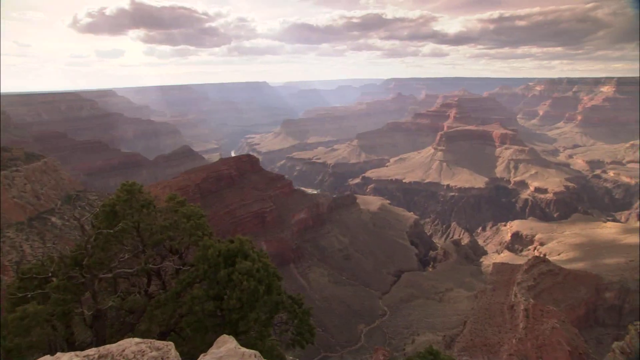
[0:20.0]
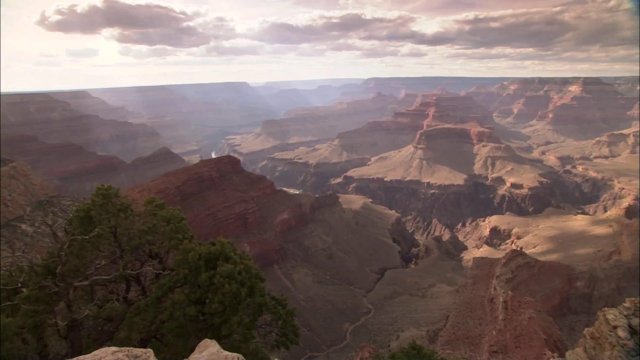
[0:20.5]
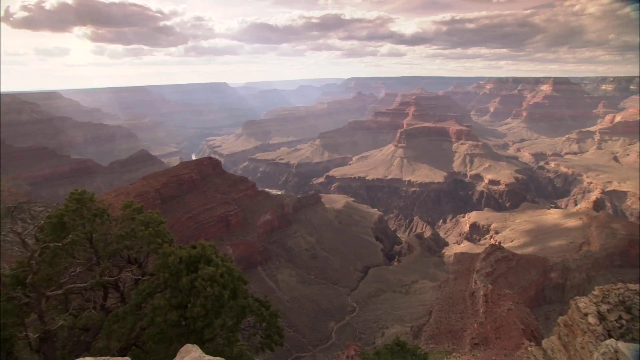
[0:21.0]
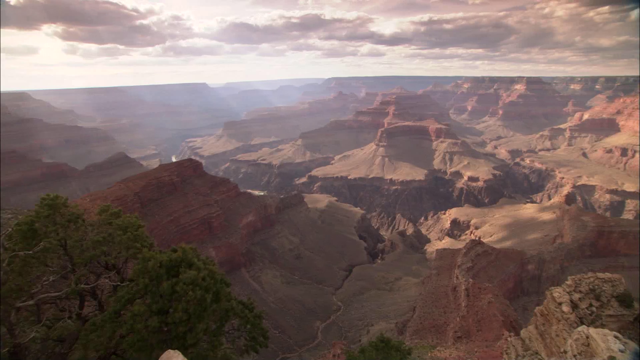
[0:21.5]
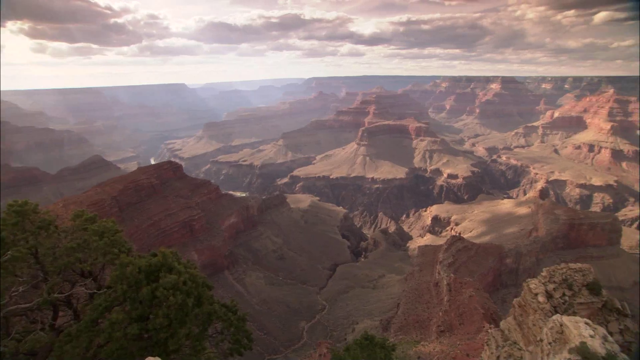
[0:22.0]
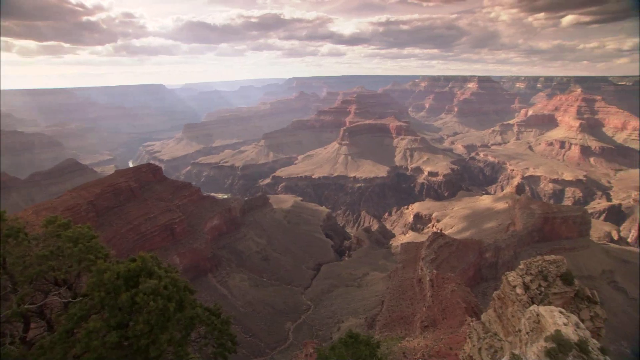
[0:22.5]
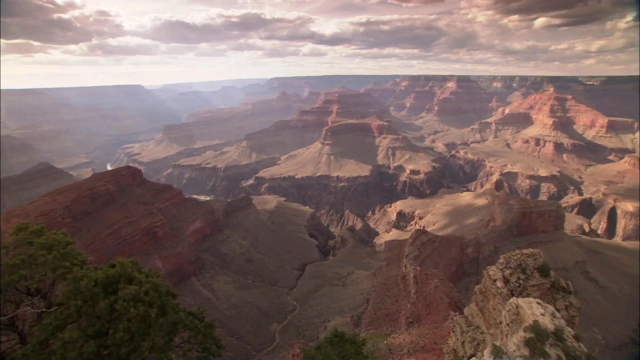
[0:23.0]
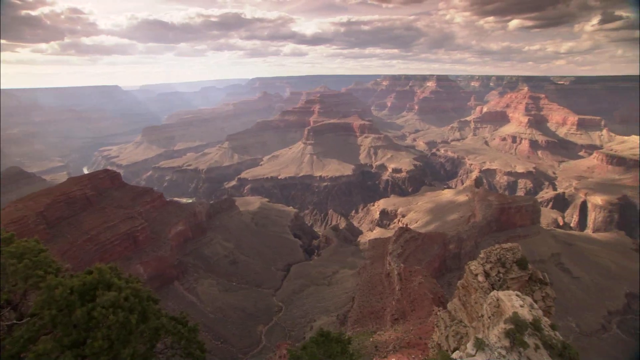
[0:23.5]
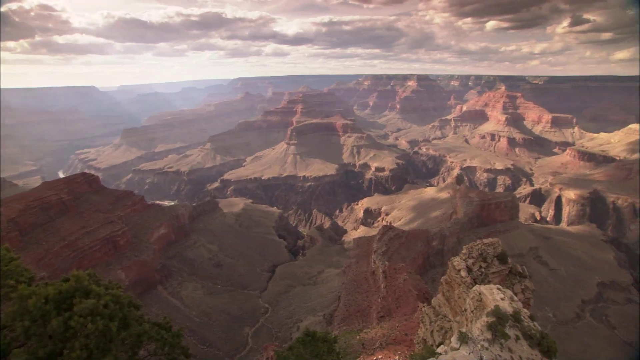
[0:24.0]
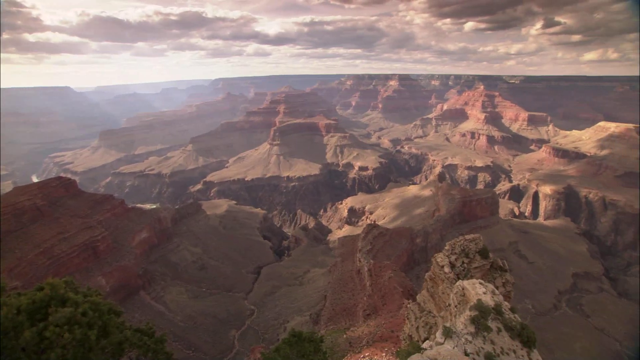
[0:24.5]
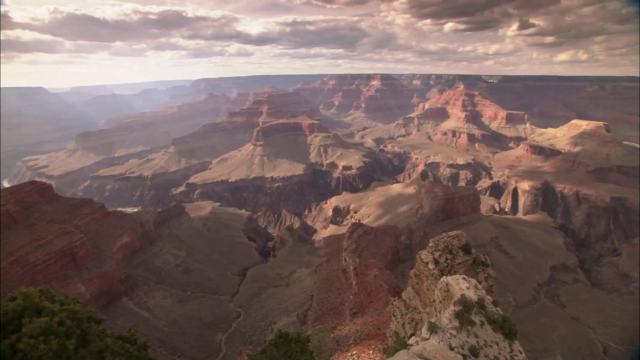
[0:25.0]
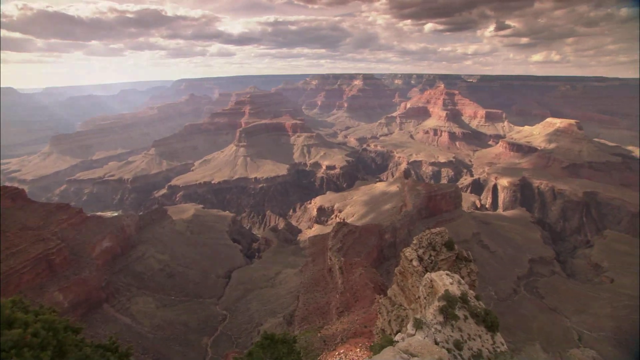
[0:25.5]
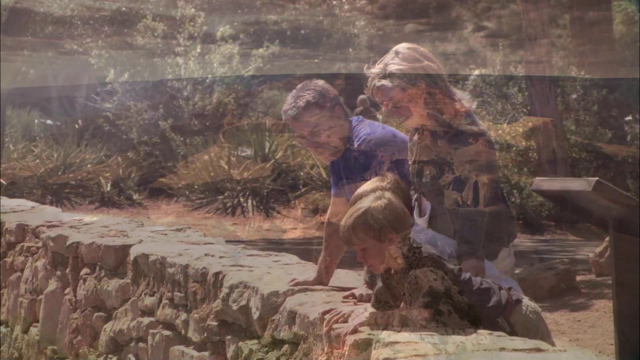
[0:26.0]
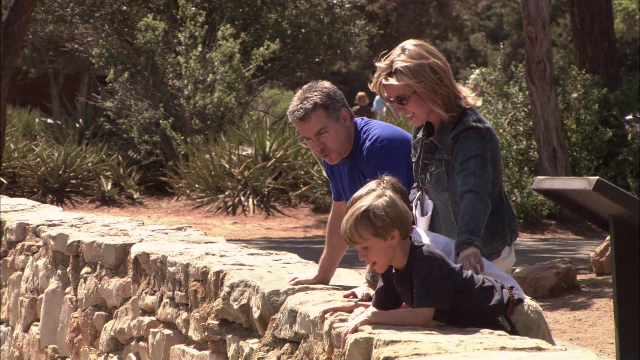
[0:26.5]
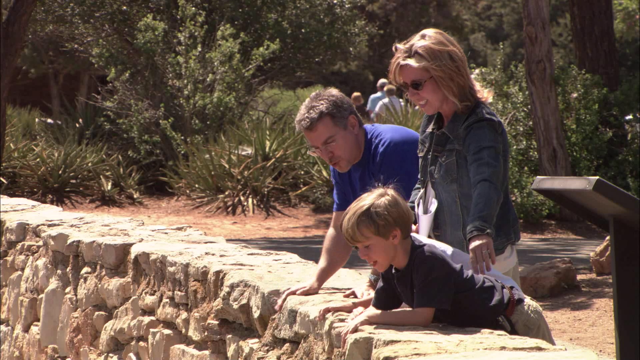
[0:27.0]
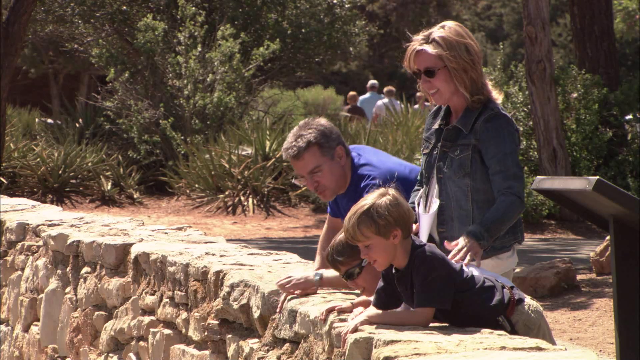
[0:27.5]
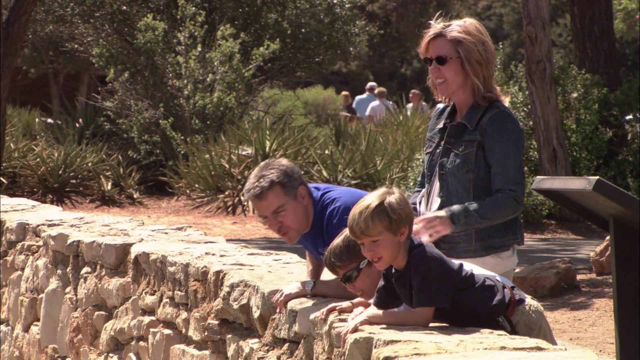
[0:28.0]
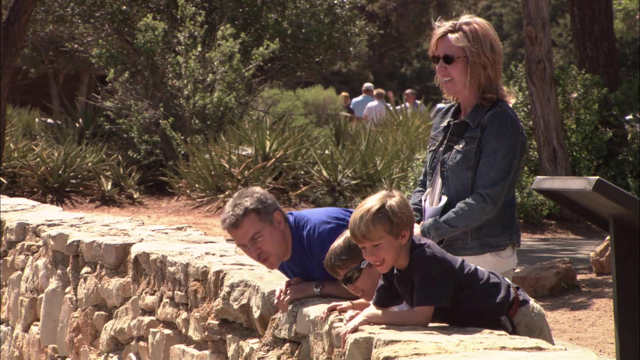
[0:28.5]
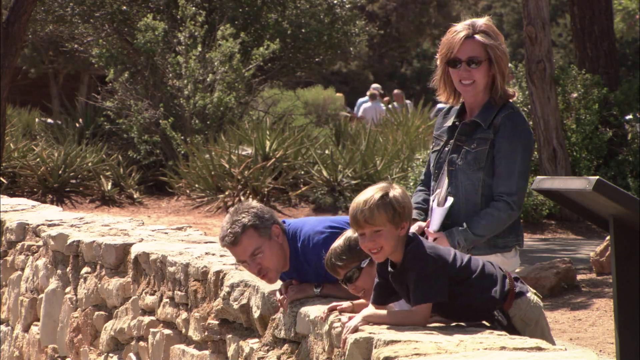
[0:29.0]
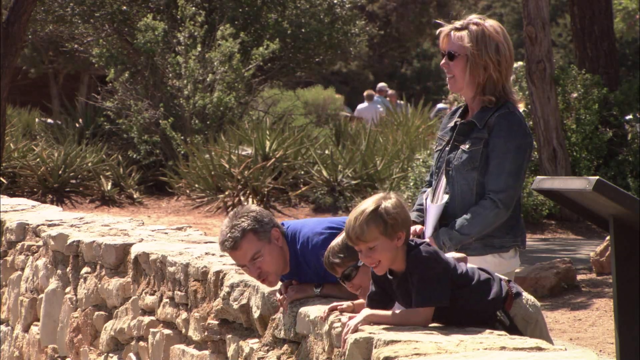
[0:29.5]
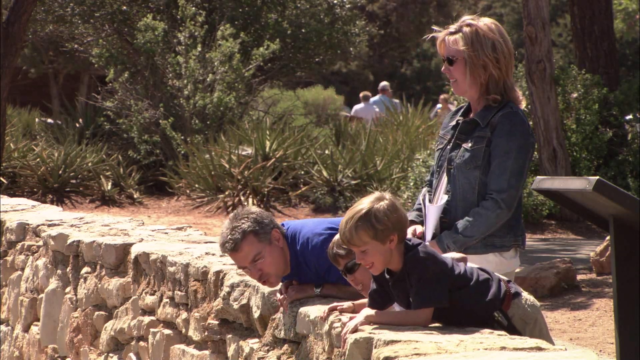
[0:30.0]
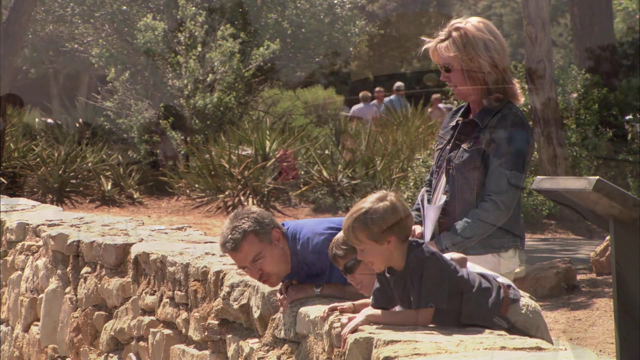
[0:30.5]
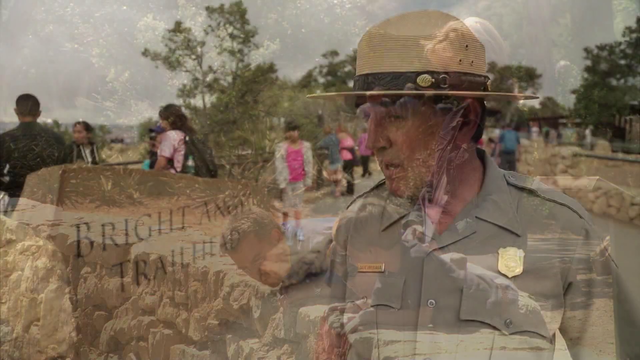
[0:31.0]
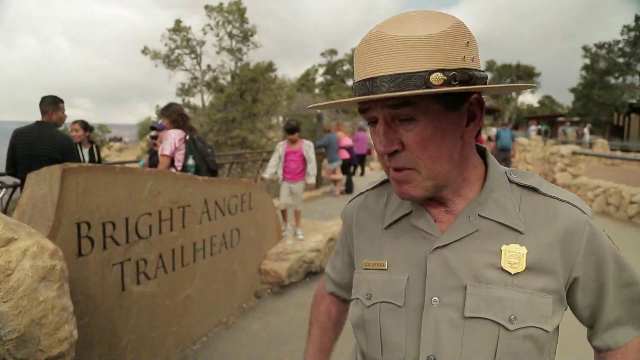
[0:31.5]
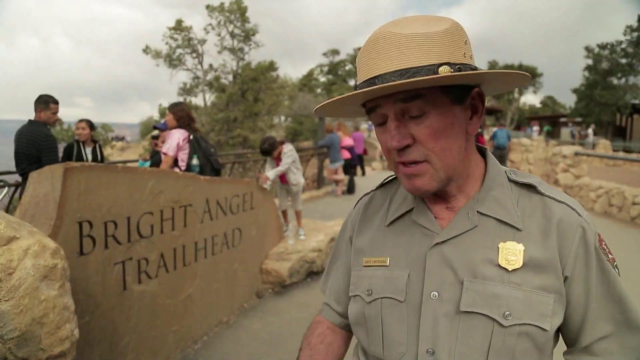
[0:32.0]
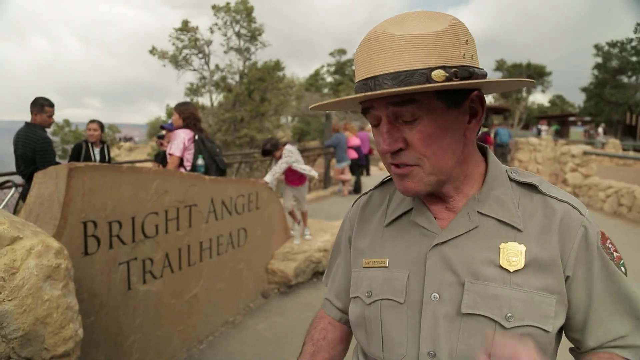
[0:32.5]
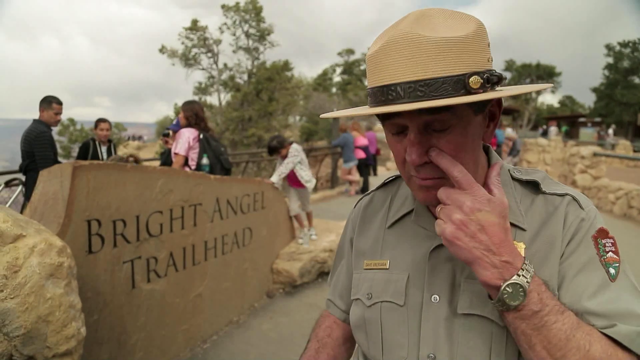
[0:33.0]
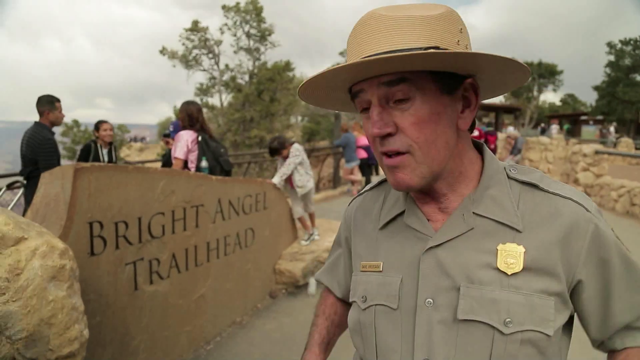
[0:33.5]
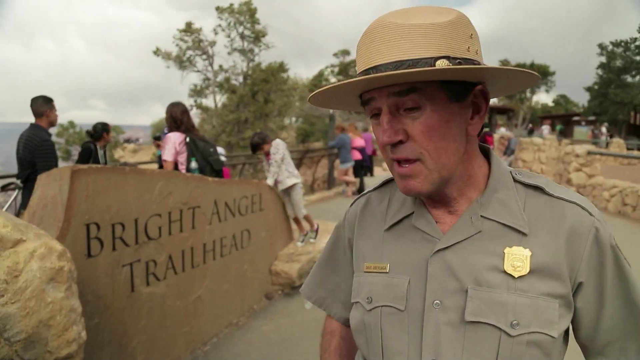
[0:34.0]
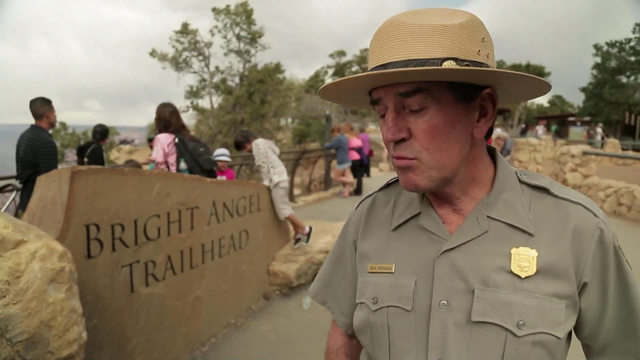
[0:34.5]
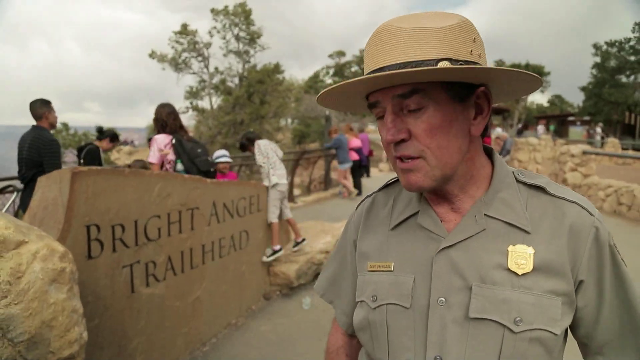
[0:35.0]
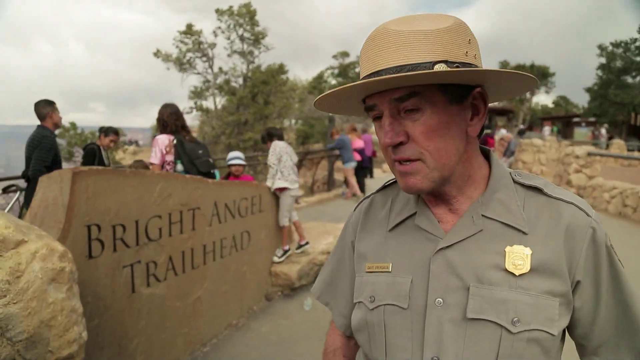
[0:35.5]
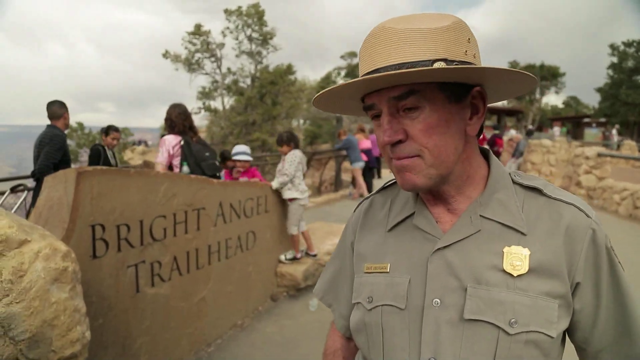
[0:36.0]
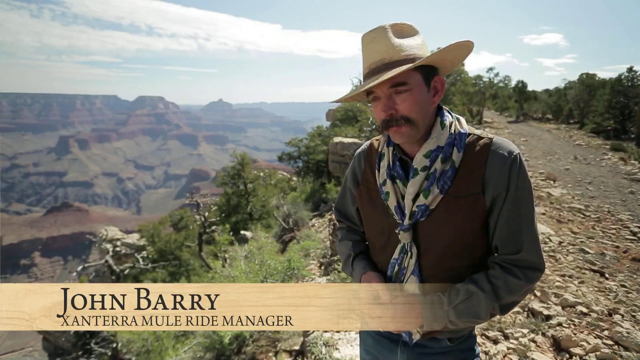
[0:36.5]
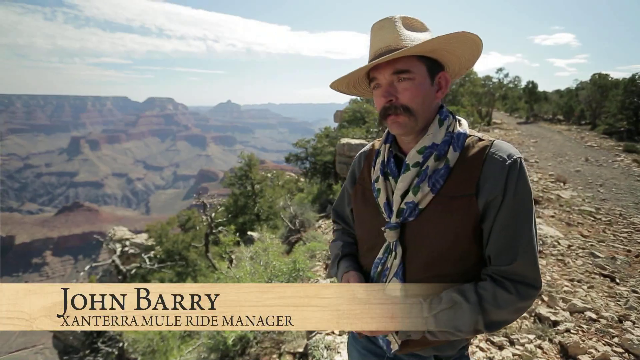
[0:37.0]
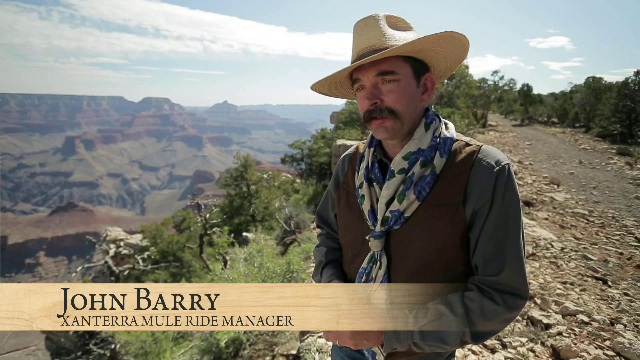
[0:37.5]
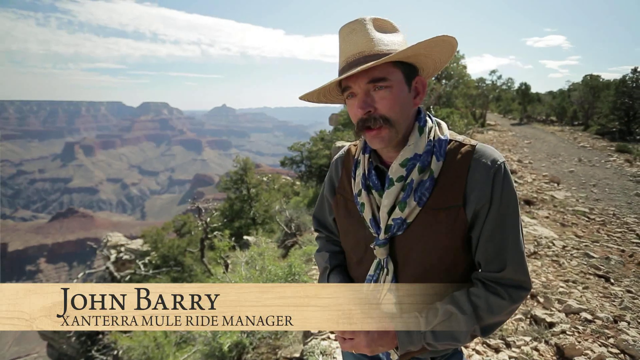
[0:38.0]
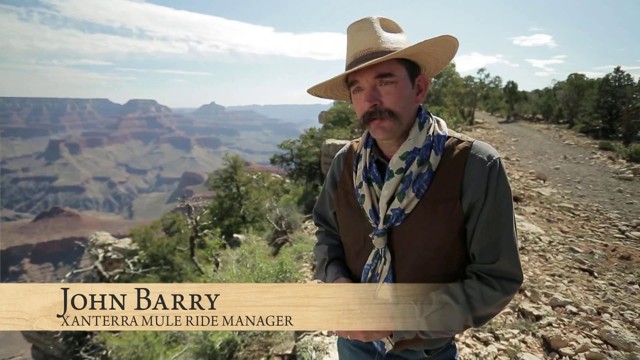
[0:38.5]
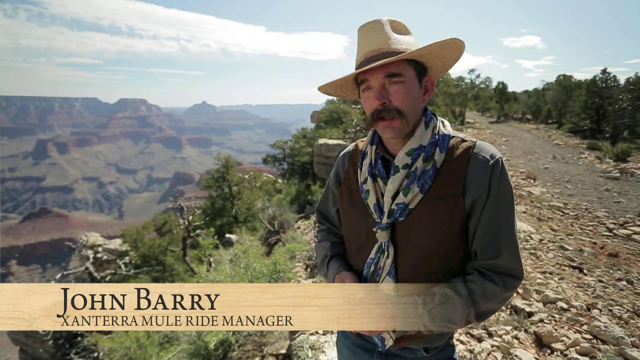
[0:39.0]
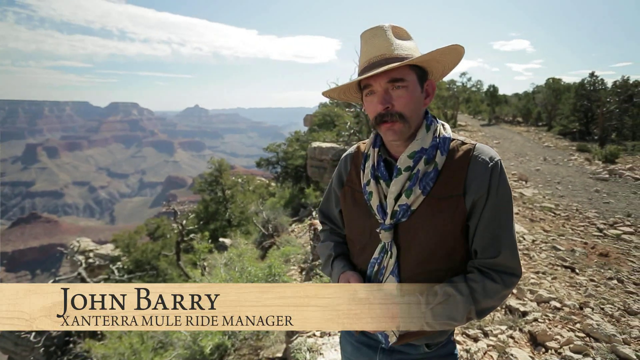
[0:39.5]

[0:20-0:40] An area that is a tourist attraction is shown, with a family of four children and members of the group. A few green trees appear, shown only from the top. On the other side is a park with natural trees and many people there with children and their families.